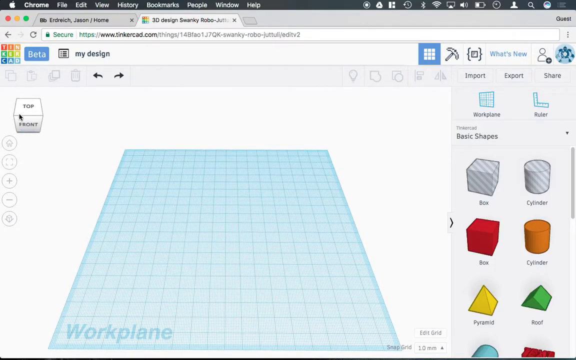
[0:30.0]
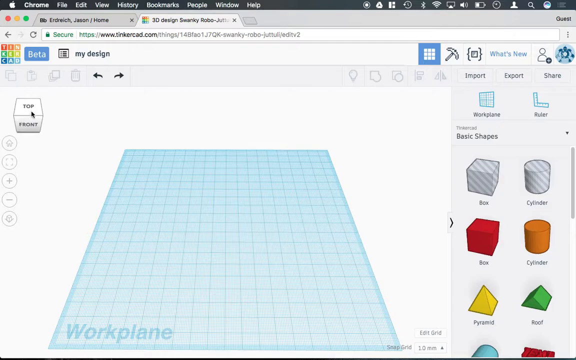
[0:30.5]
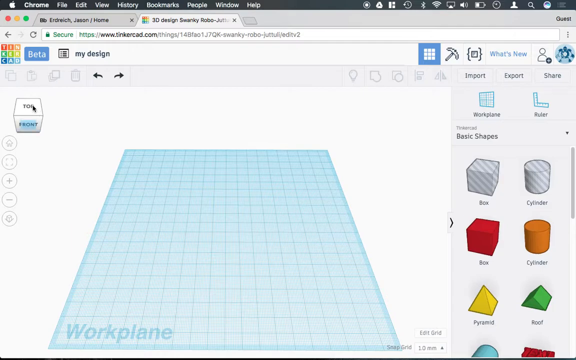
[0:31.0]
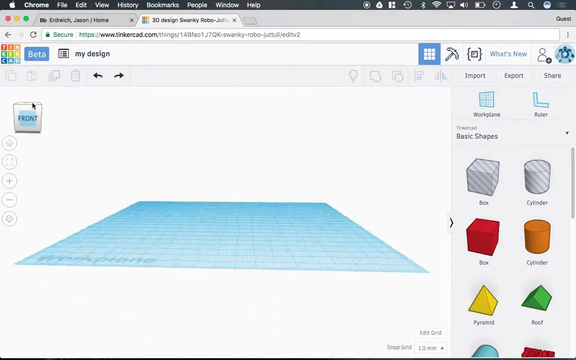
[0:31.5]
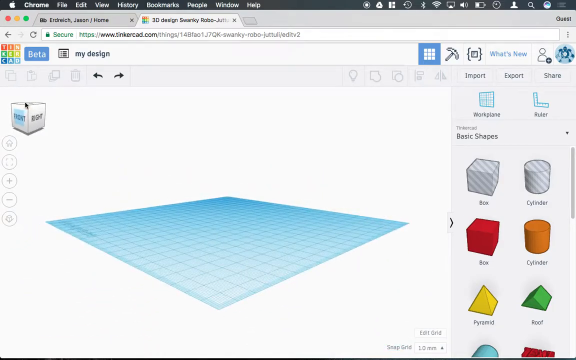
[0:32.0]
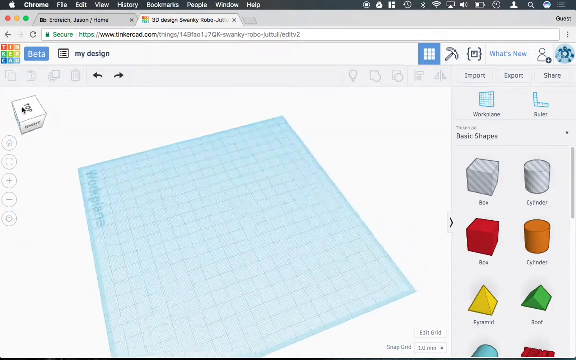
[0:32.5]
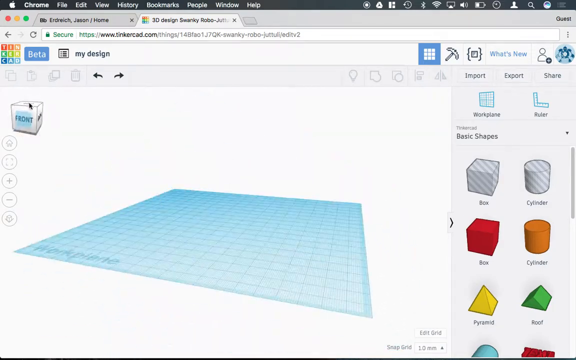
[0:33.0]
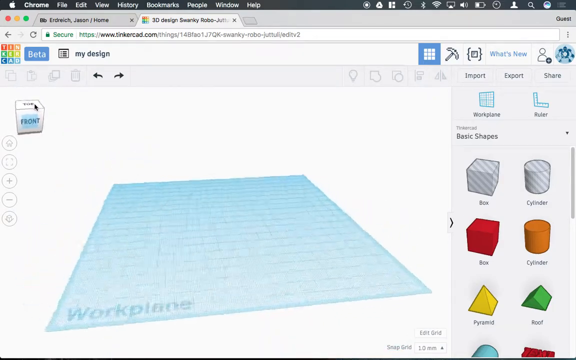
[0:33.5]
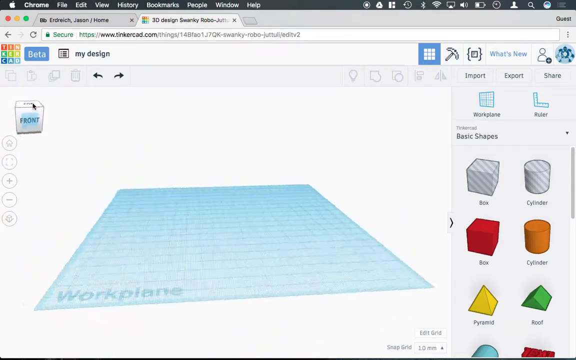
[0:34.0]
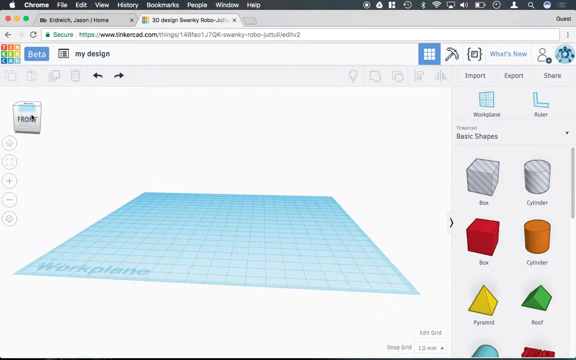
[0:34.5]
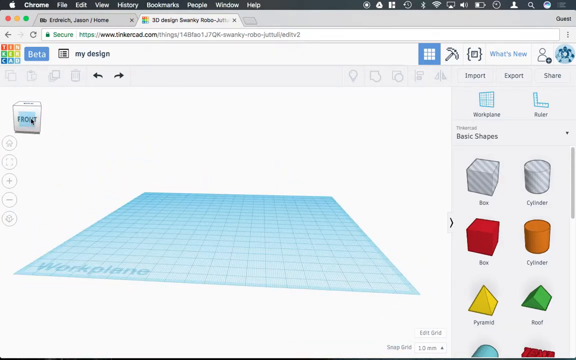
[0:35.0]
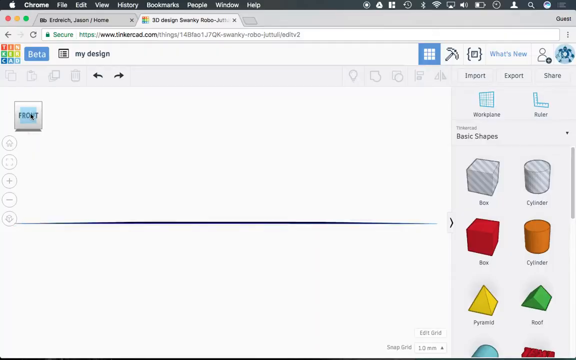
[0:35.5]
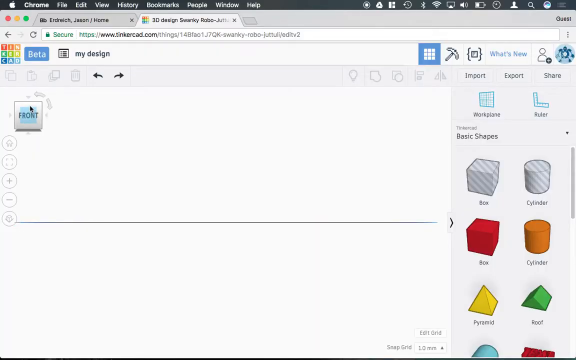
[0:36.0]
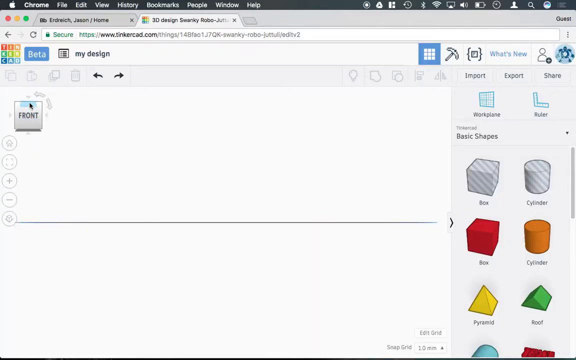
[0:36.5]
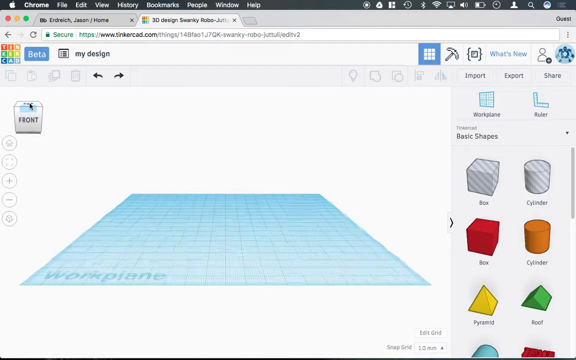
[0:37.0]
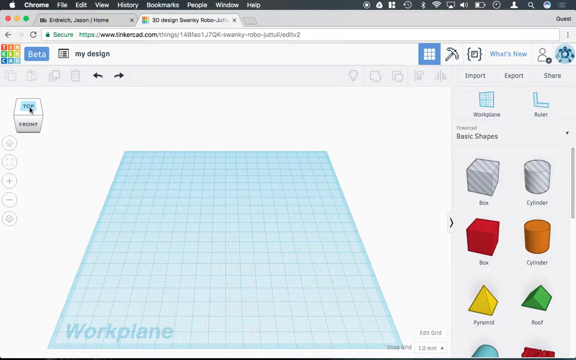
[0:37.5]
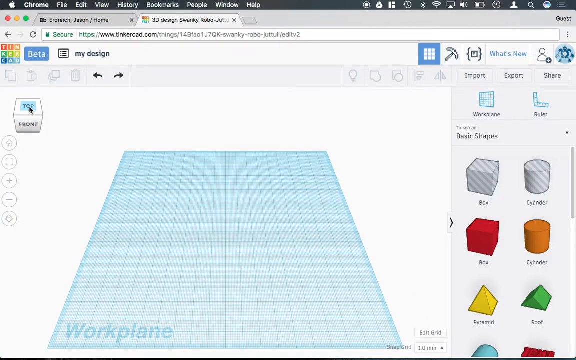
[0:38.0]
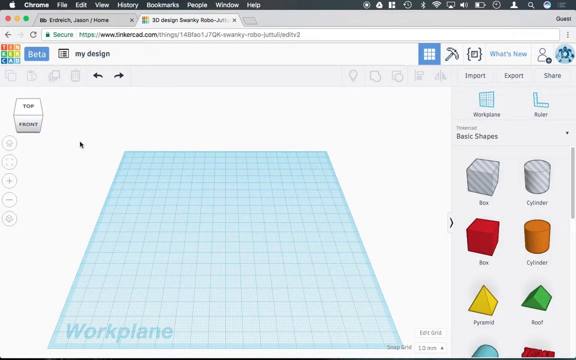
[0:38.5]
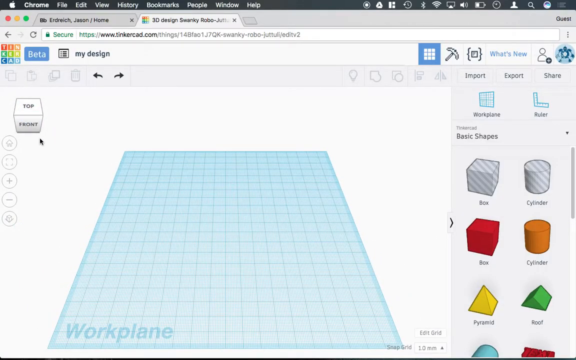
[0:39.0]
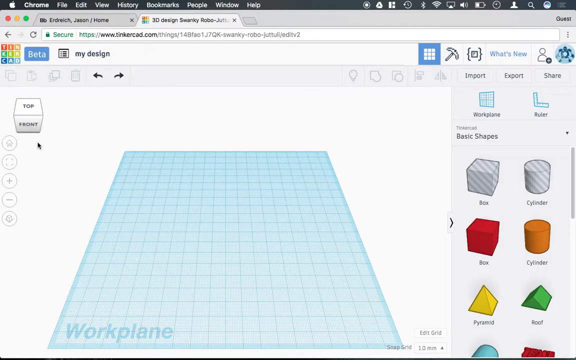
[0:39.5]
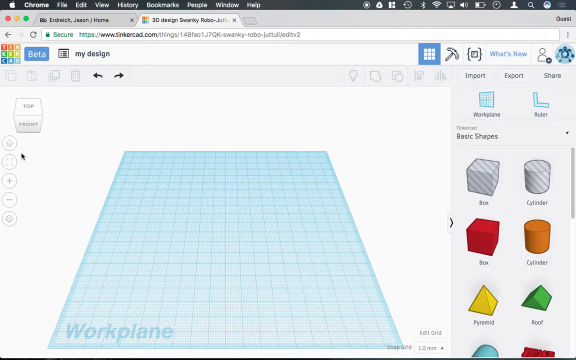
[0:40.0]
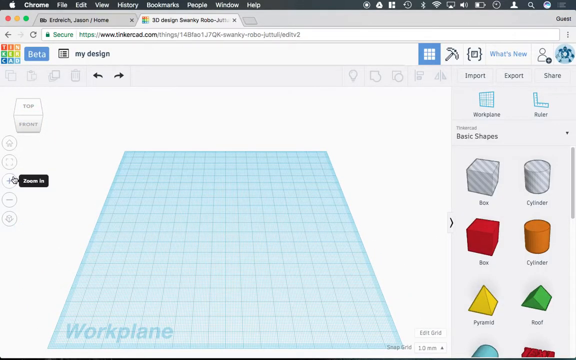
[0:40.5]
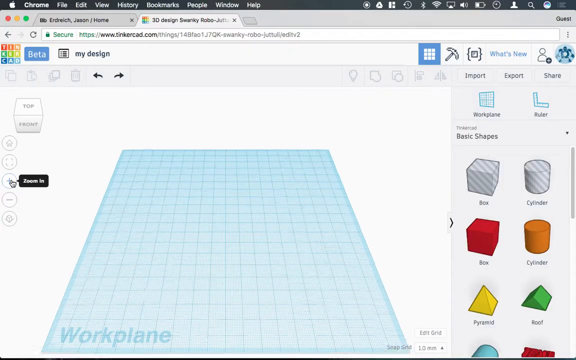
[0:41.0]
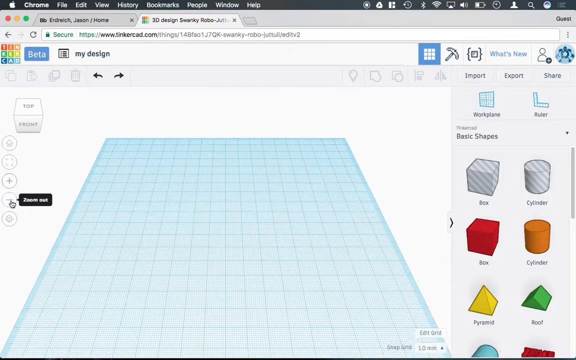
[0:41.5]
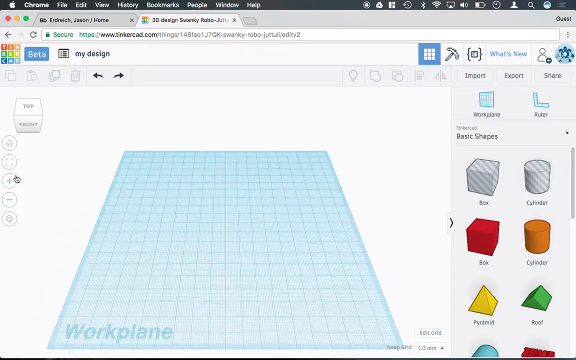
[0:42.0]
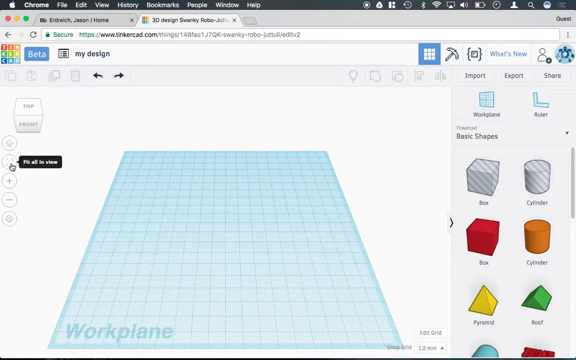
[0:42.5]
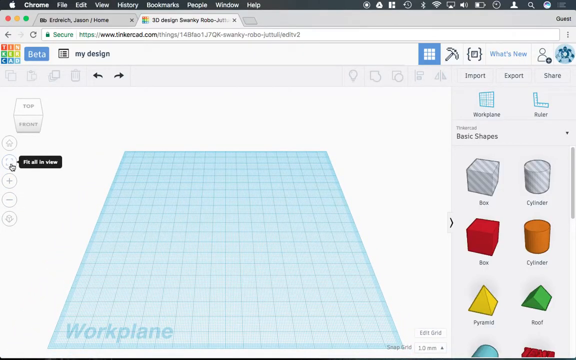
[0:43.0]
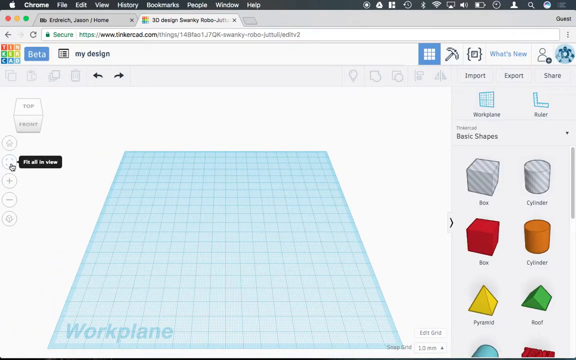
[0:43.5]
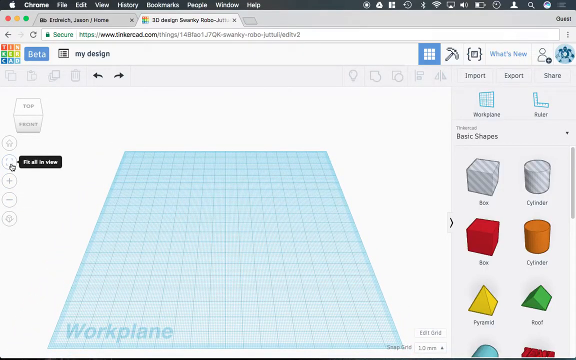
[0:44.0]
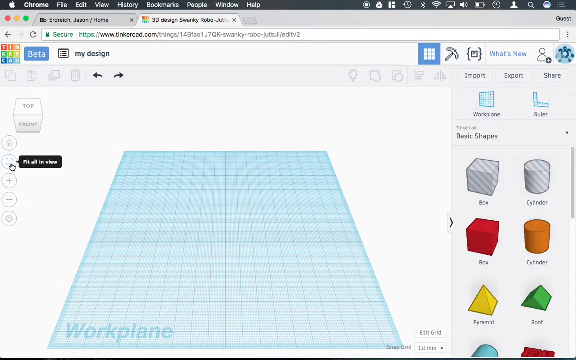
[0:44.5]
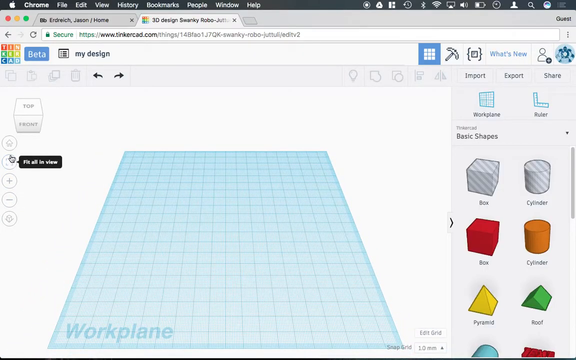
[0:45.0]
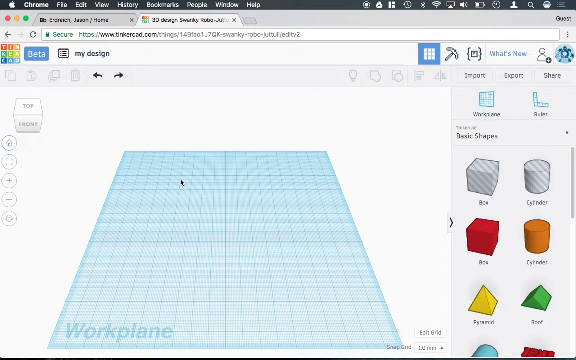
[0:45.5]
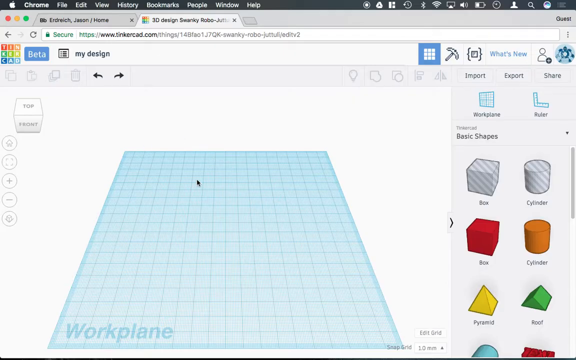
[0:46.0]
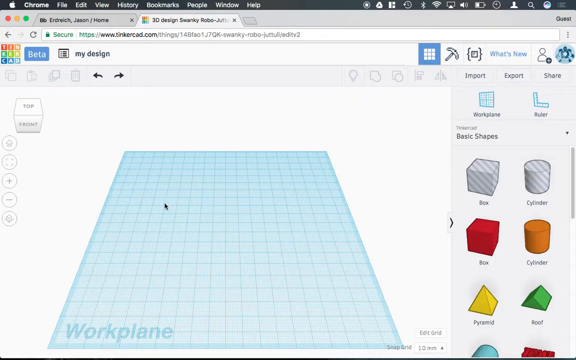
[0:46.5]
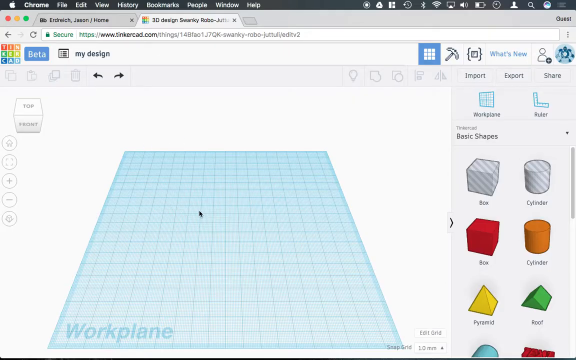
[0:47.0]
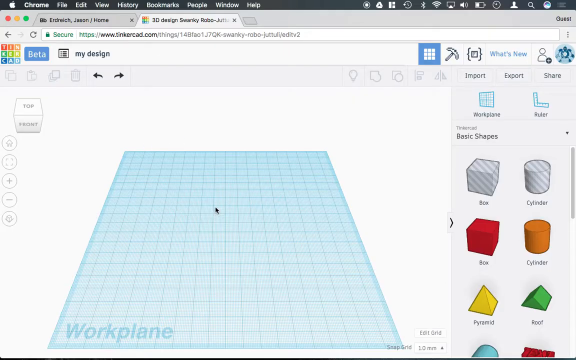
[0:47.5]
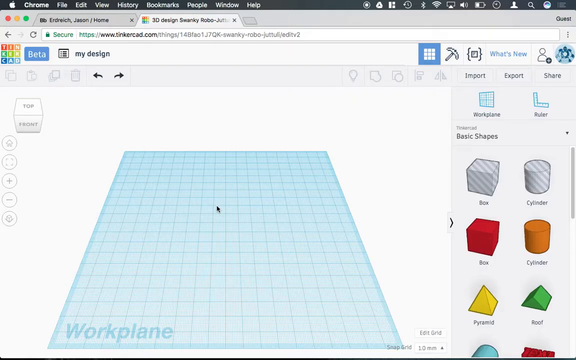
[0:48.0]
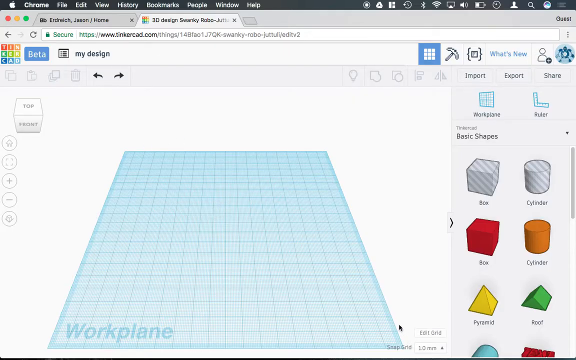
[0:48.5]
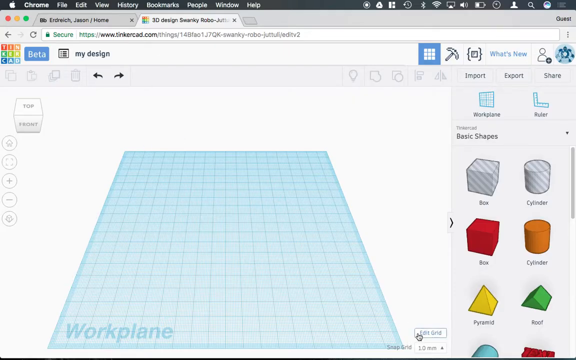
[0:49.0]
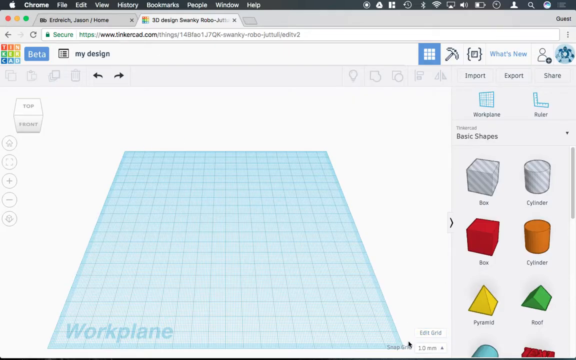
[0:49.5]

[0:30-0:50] The 3D grid workspace is manipulated, tilted to show the front side, and rotated around to show all the different areas. The plus and minus buttons on the left-hand side of the page are clicked: first the plus button, which zooms in, then the minus button, which zooms out. The user also clicks on a cube shape labeled with top, front, left, and right, and the plane of the workspace automatically aligns to the orientation shown on the cube.